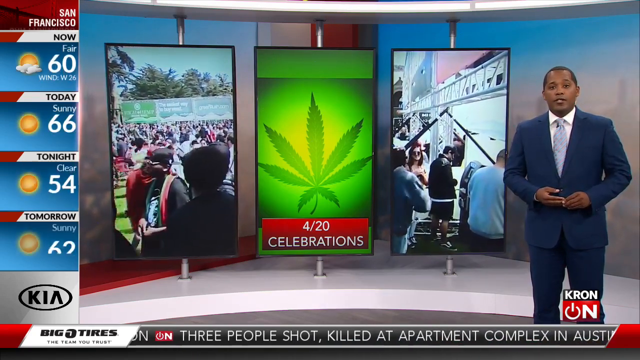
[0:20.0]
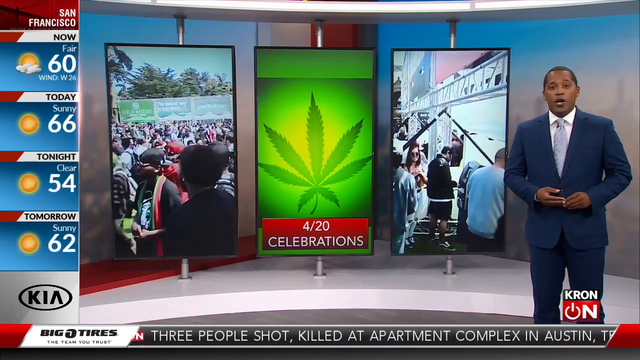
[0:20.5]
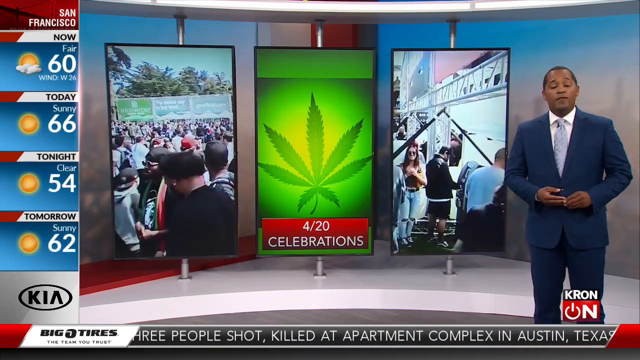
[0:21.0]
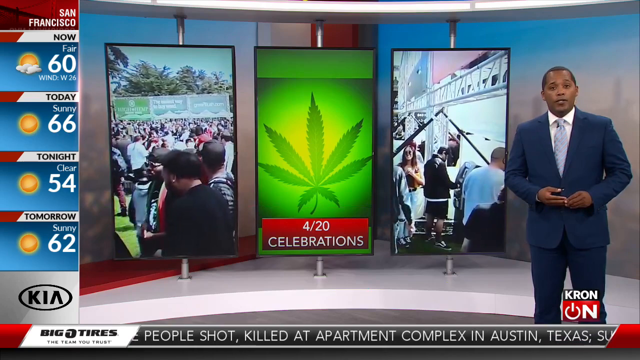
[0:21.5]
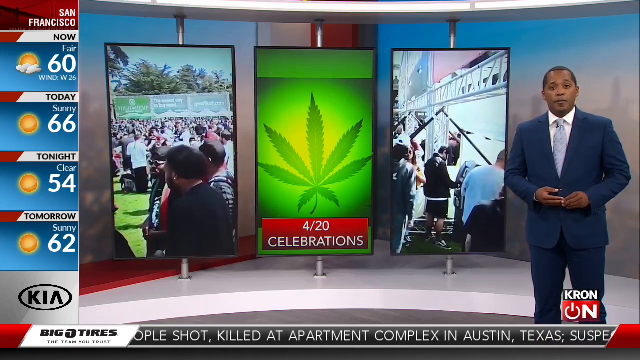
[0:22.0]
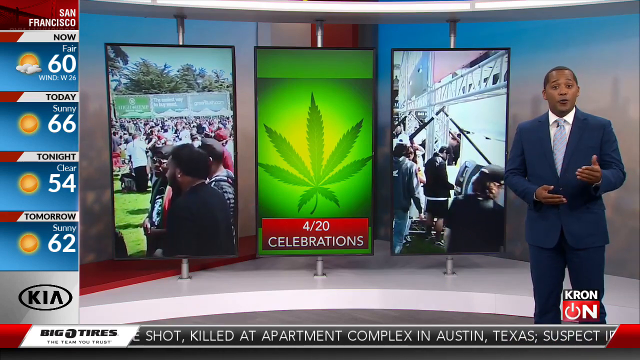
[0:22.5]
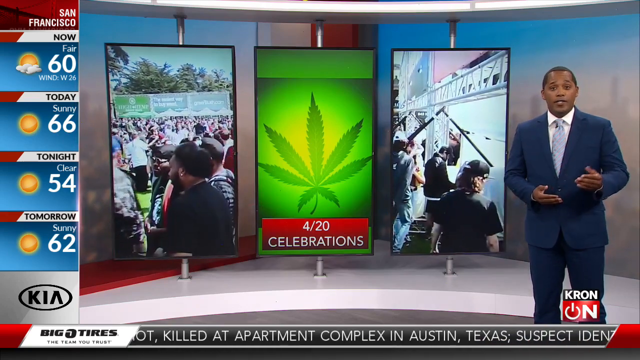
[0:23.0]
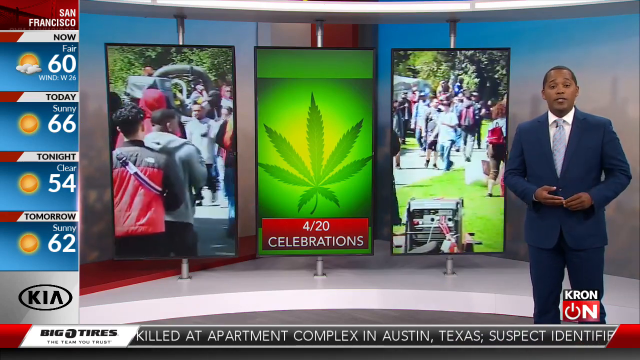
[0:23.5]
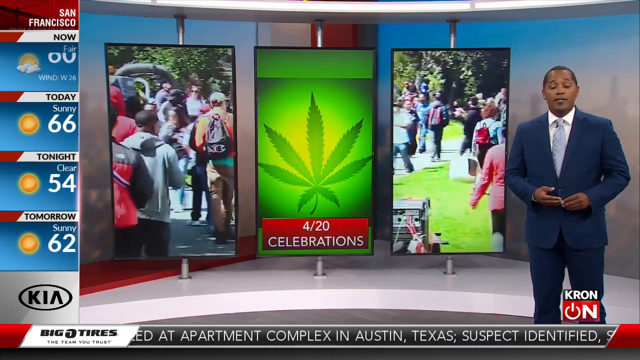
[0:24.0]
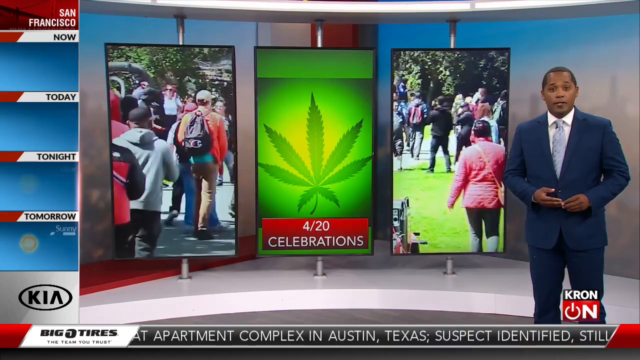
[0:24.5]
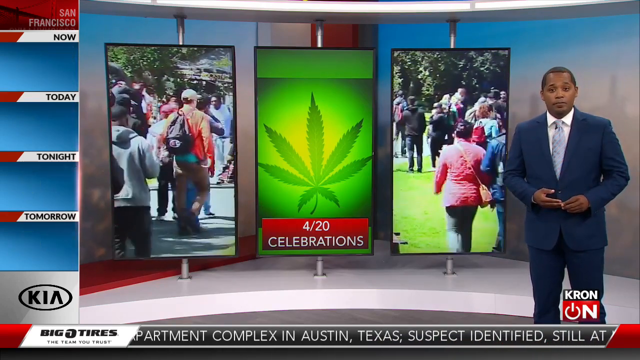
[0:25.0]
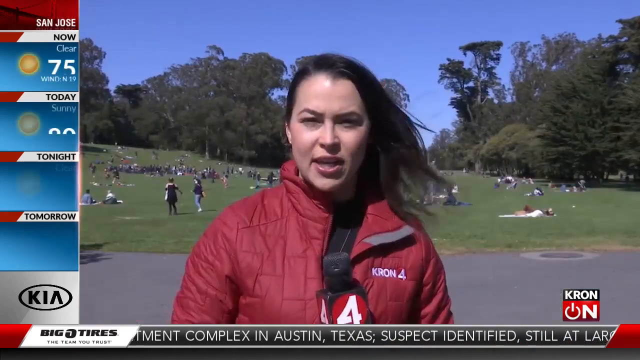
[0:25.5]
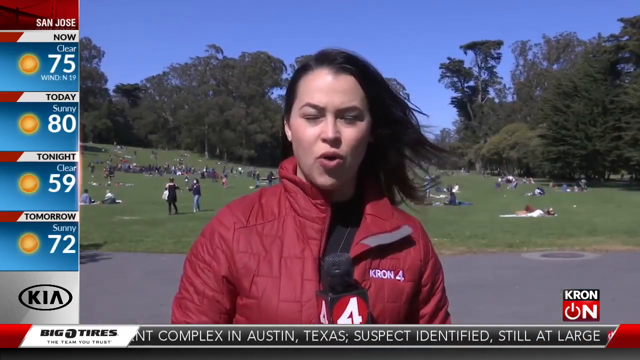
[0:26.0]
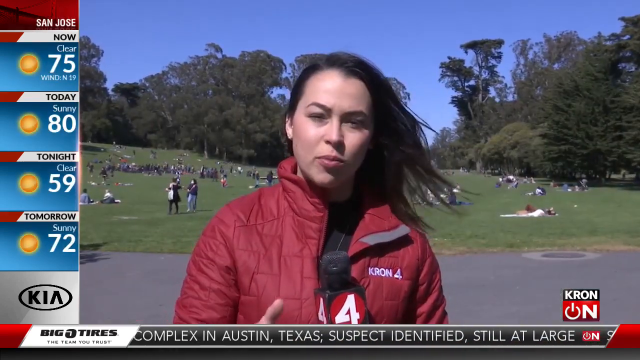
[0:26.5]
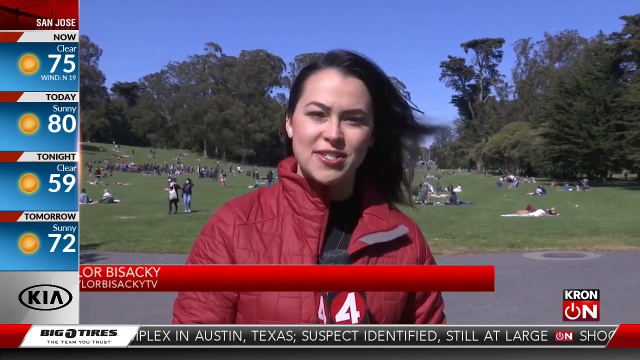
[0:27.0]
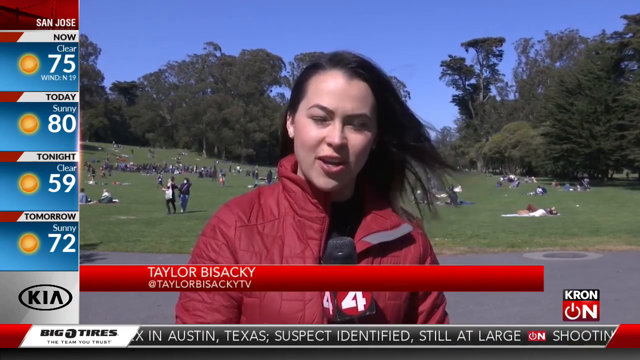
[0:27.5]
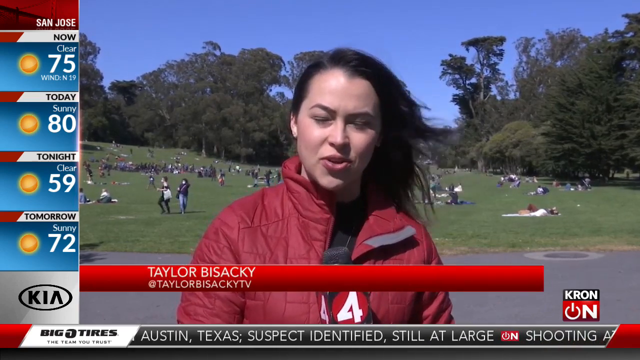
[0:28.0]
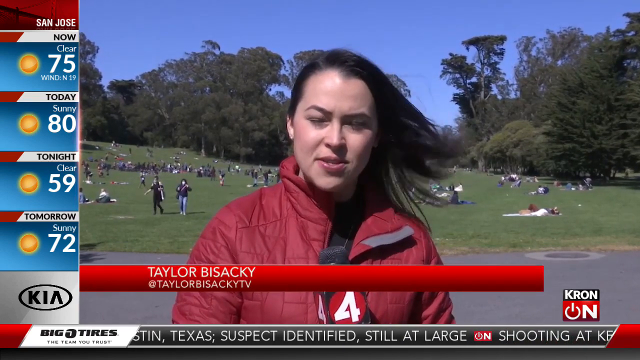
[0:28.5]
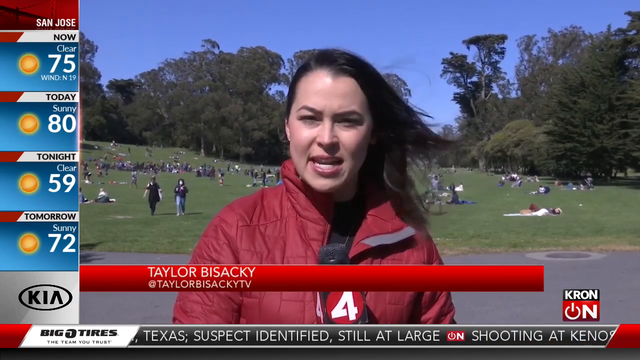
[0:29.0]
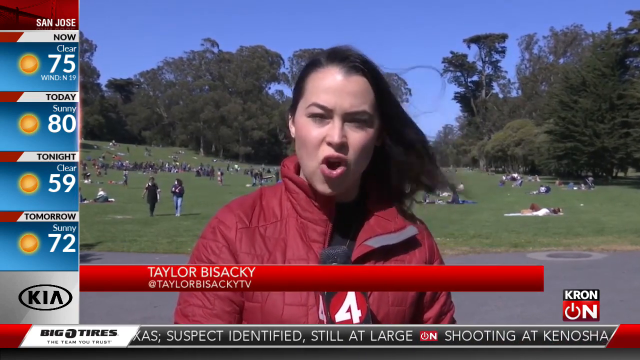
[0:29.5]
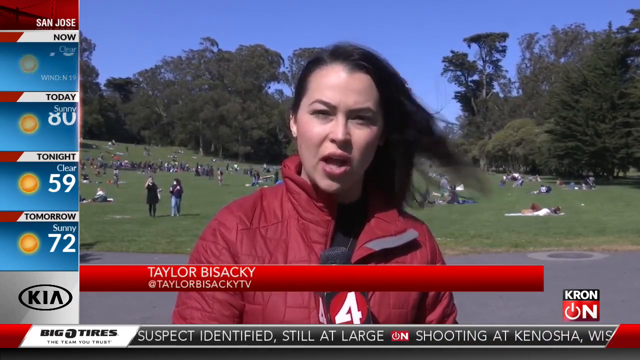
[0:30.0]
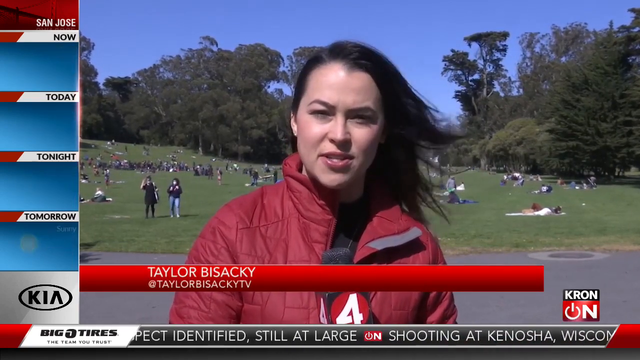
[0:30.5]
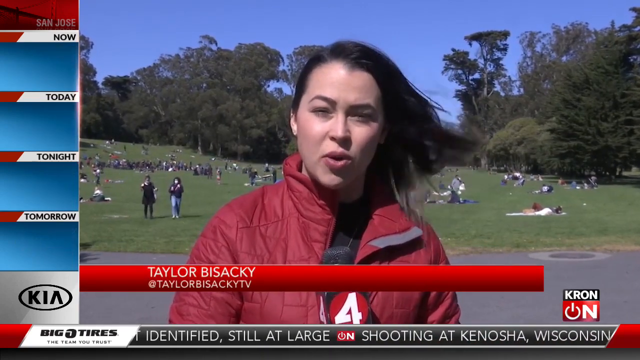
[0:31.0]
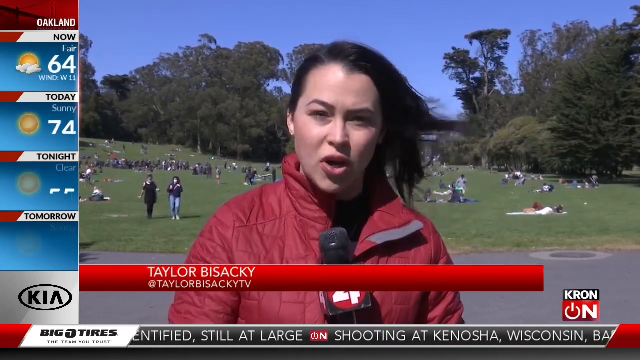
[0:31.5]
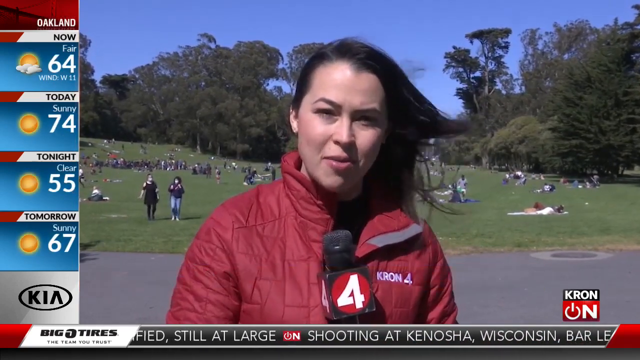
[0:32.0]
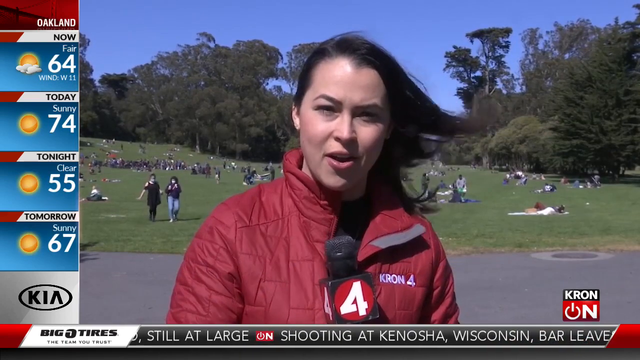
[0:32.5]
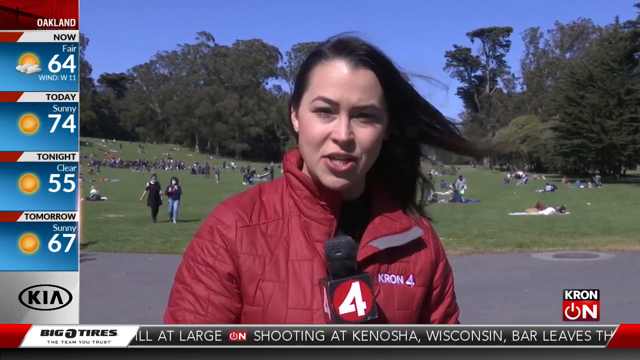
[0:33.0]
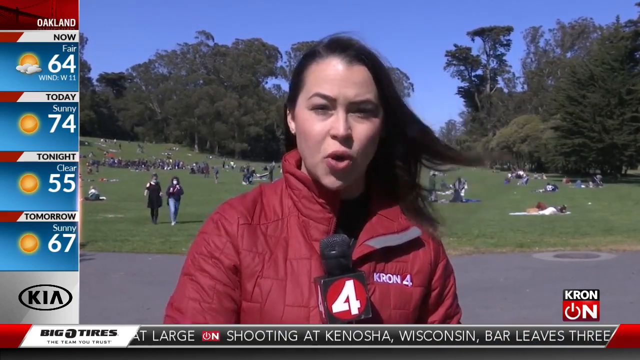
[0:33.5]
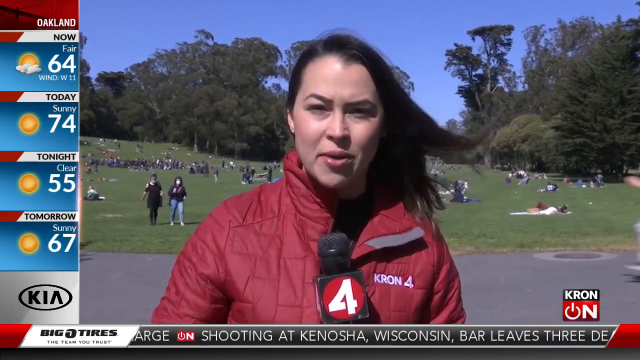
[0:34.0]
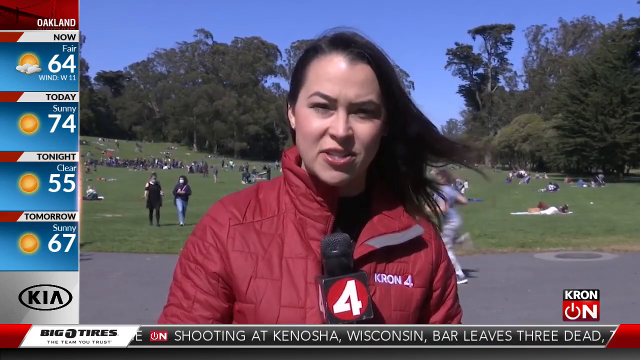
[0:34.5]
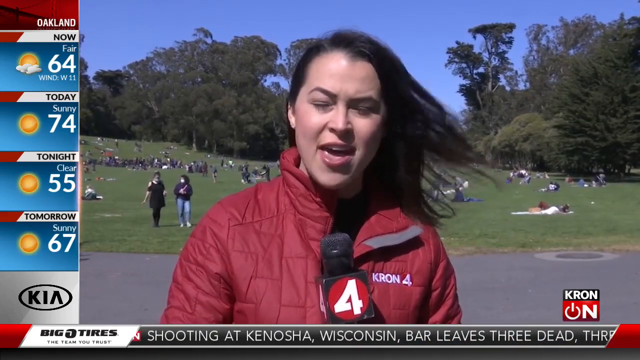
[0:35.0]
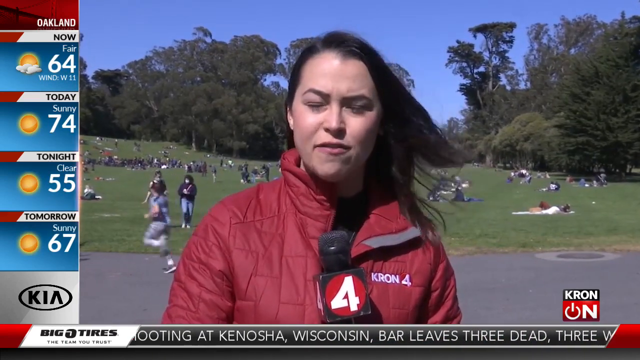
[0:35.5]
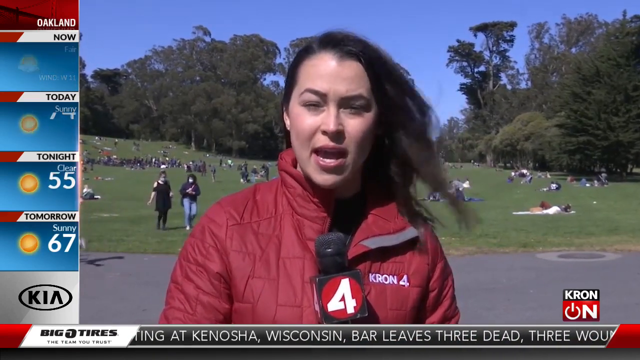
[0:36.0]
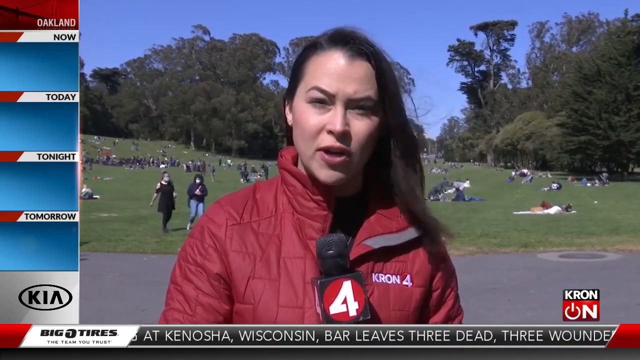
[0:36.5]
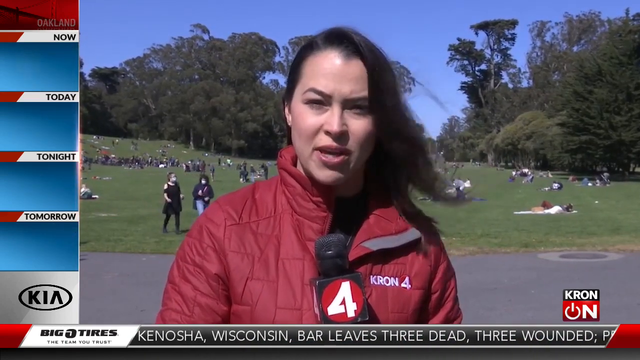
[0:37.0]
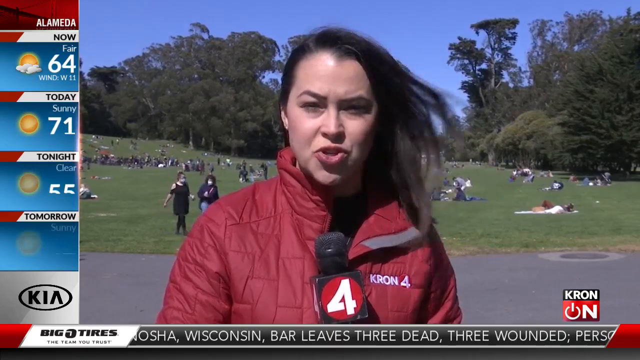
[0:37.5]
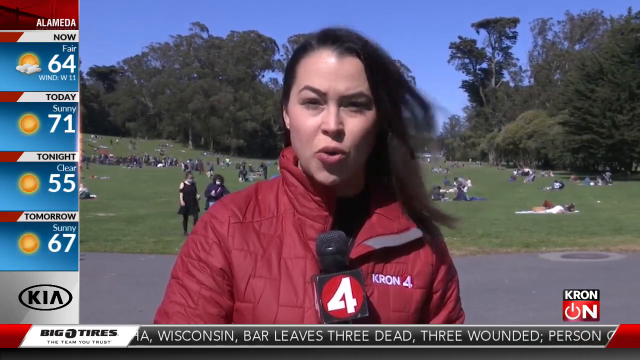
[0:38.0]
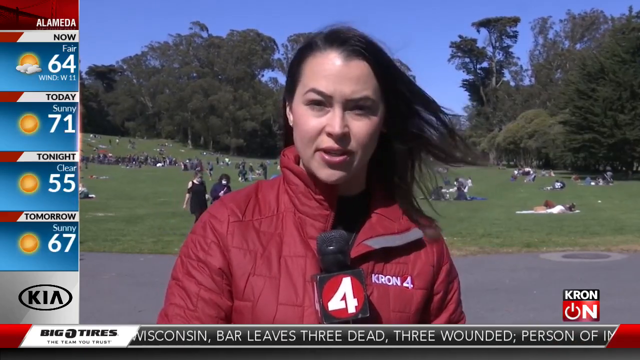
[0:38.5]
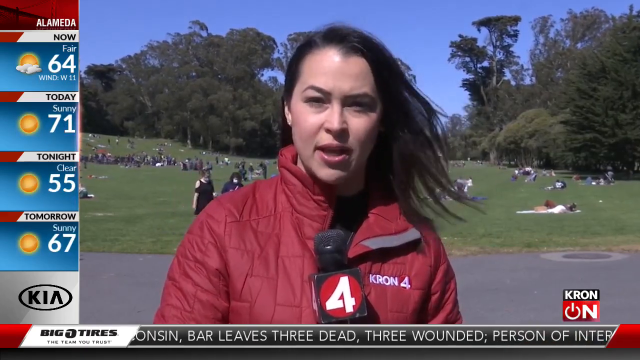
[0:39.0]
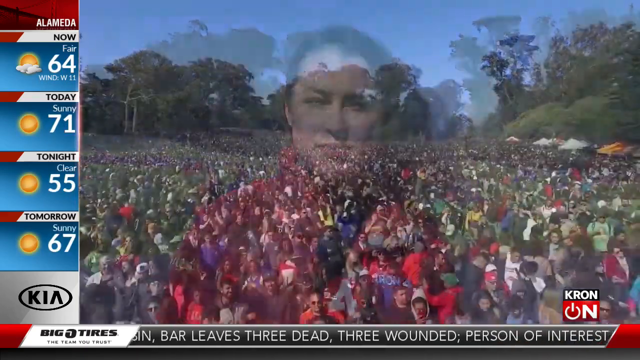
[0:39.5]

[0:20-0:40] A man in his 30s wearing a suit reads the news, with a video of people in a crowded area in the background. Next, a woman in her 20s presents the news; she wears a red jacket with the name "KNOR 4" on it, carries a microphone, and her hair is blown to the side by the wind. Behind her are many people who appear to be having a picnic or playing games, and someone runs behind her. Footage of people who look like they are attending an event is shown, and the screen displays the name of the news presenter. On the side of the screen, weather for different towns shows temperatures for now, today, tonight and tomorrow.